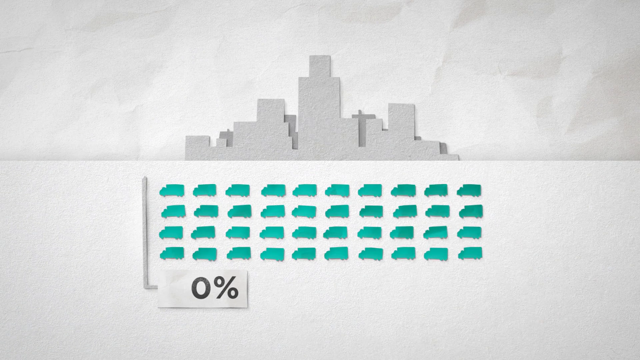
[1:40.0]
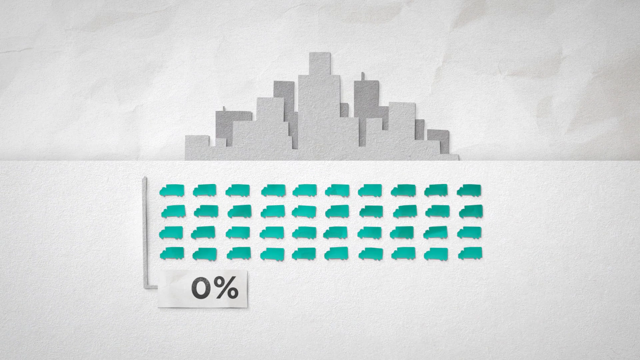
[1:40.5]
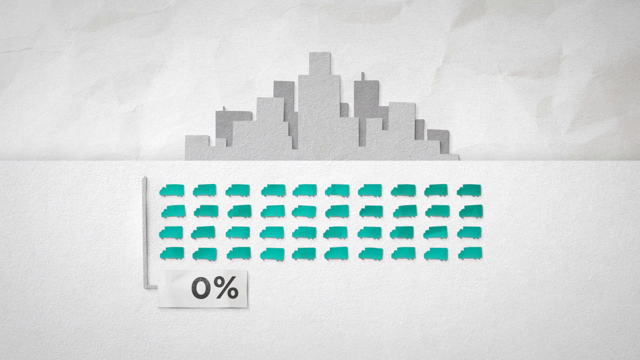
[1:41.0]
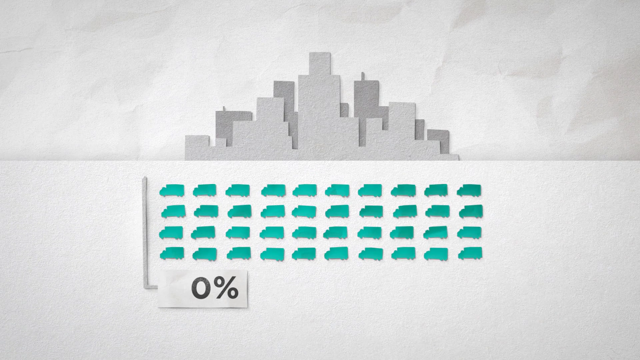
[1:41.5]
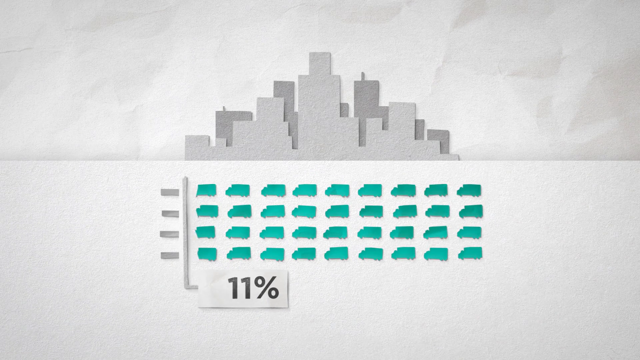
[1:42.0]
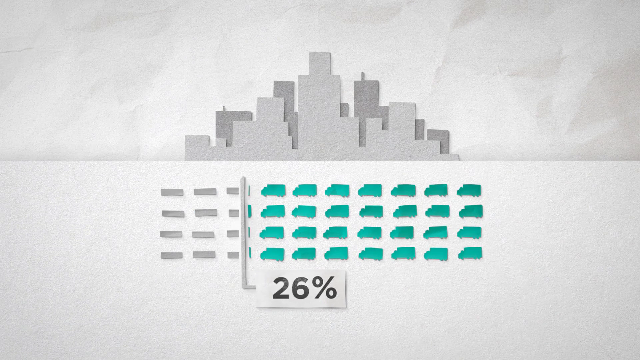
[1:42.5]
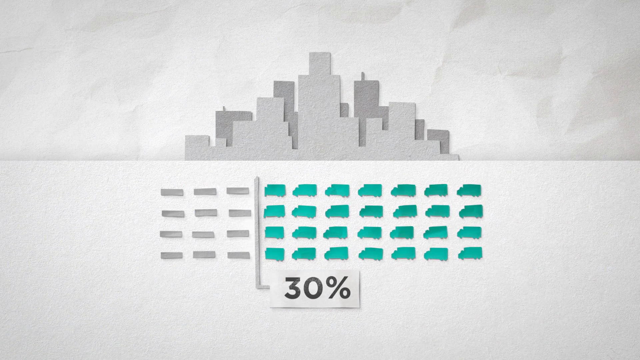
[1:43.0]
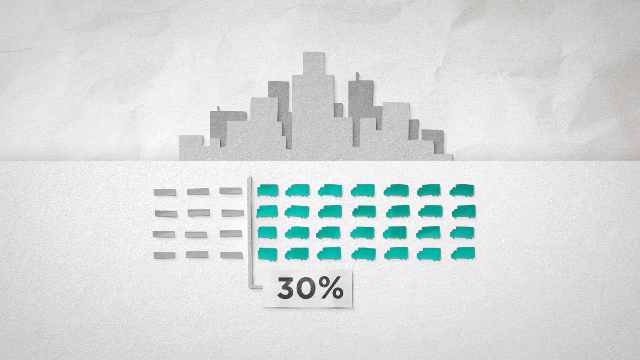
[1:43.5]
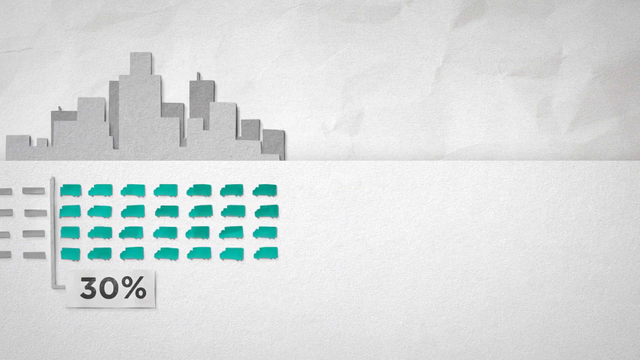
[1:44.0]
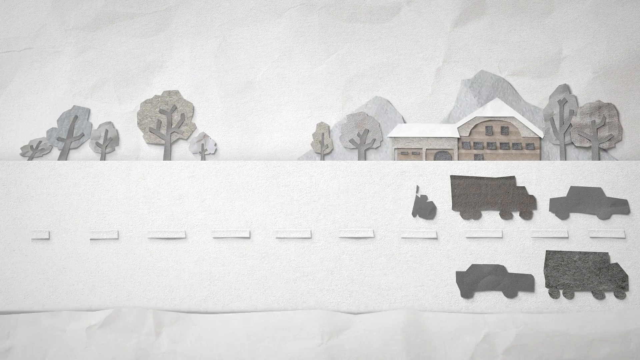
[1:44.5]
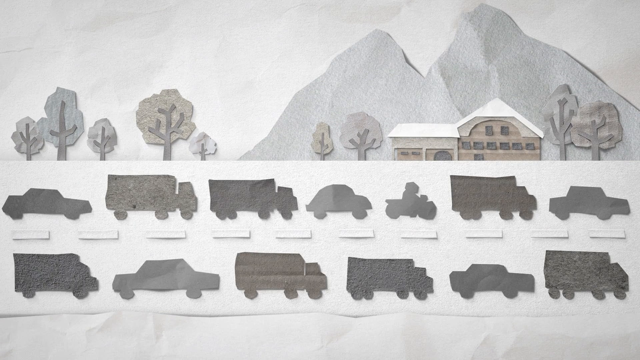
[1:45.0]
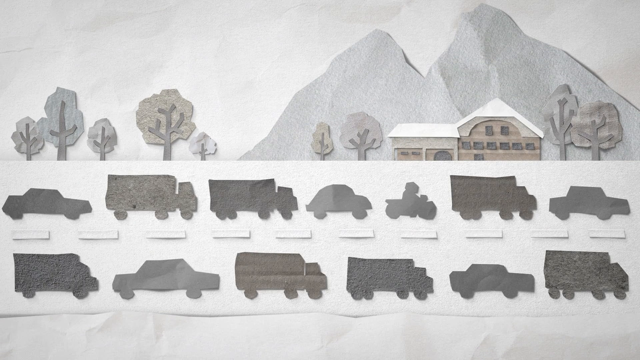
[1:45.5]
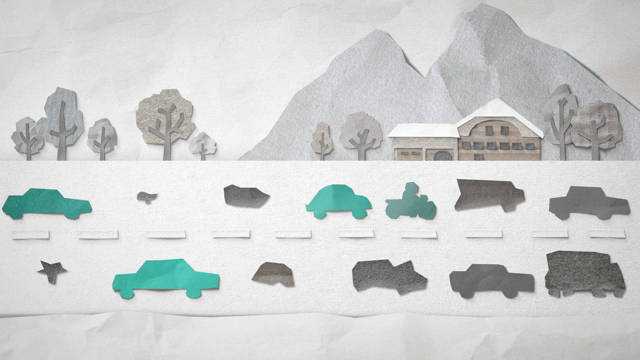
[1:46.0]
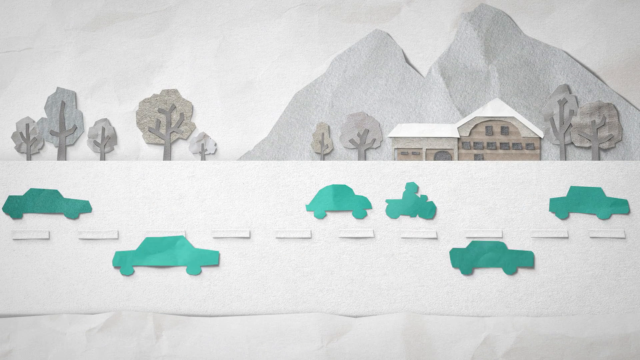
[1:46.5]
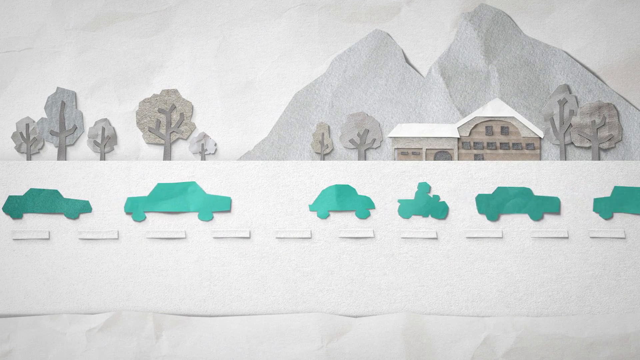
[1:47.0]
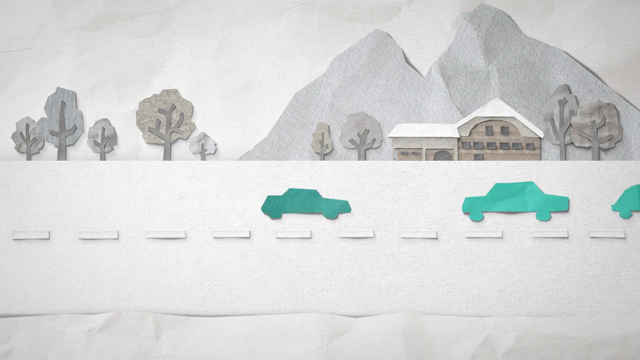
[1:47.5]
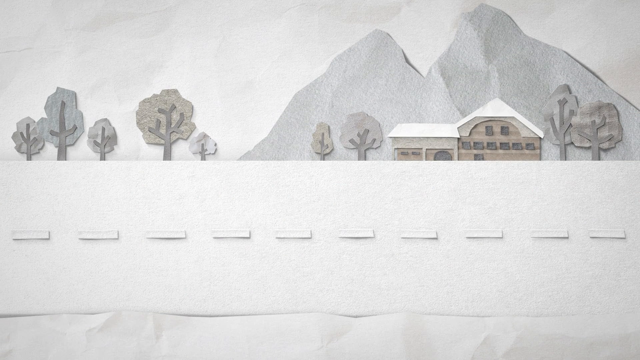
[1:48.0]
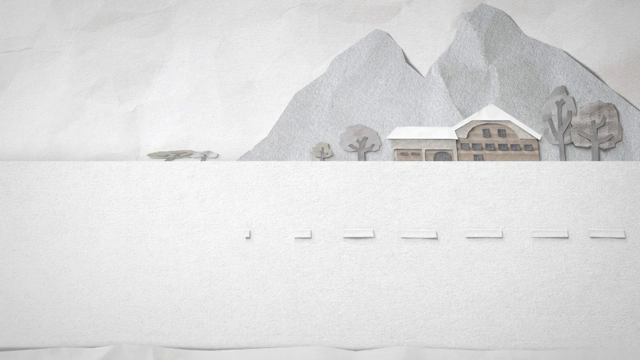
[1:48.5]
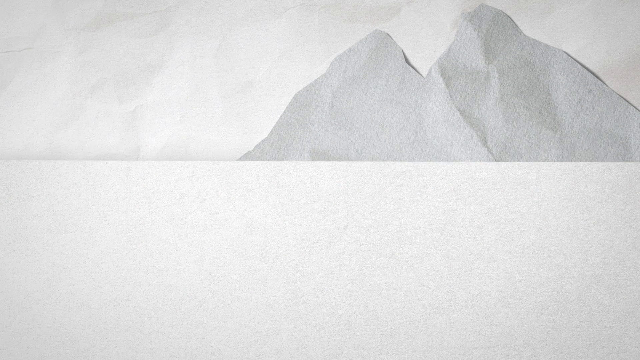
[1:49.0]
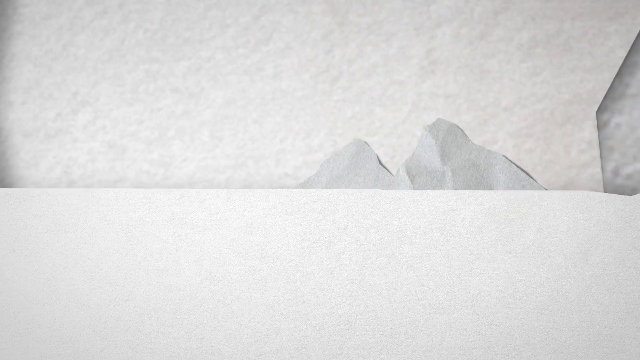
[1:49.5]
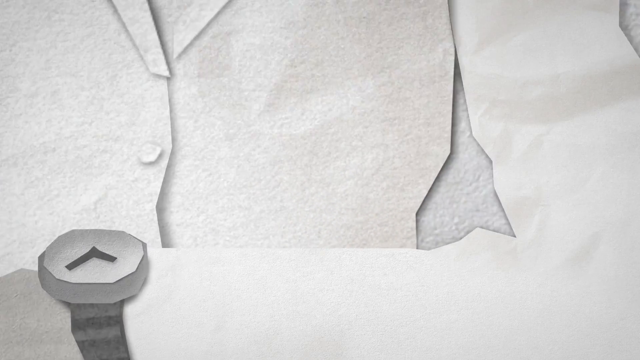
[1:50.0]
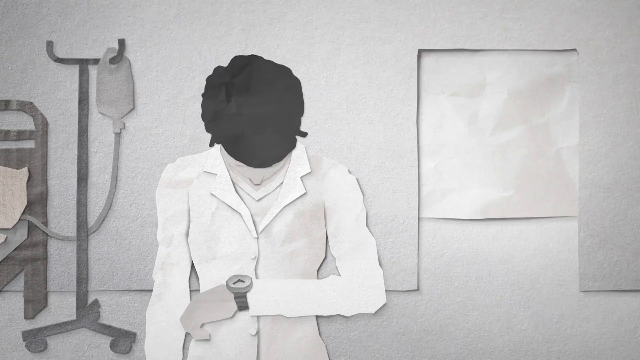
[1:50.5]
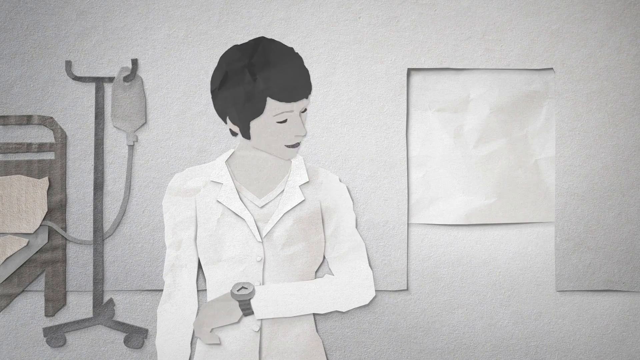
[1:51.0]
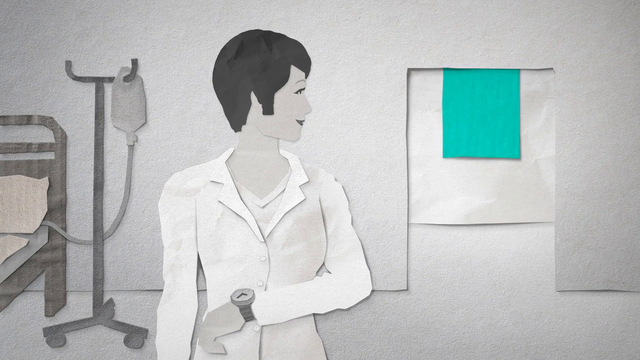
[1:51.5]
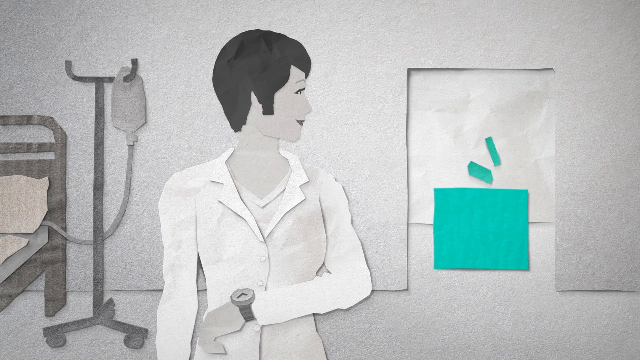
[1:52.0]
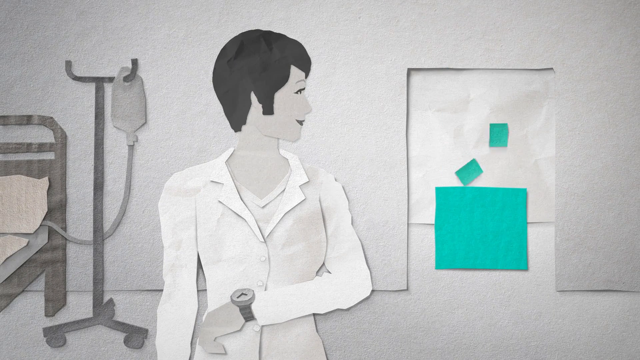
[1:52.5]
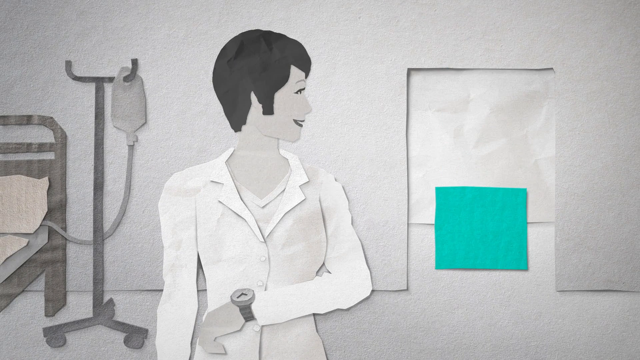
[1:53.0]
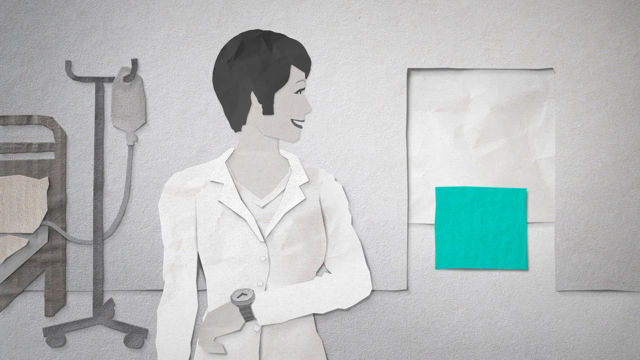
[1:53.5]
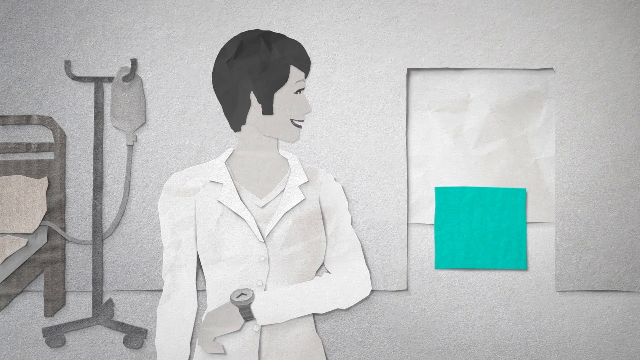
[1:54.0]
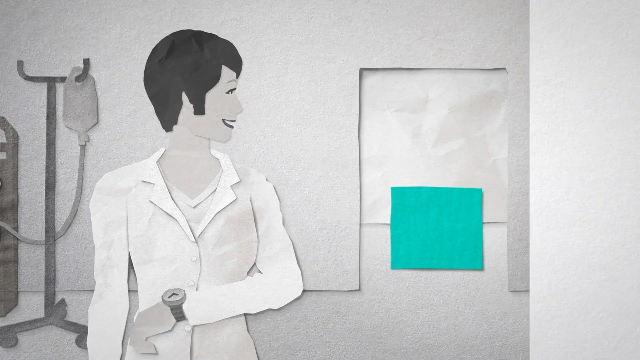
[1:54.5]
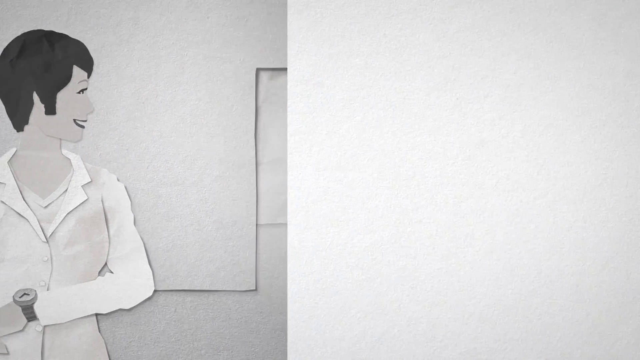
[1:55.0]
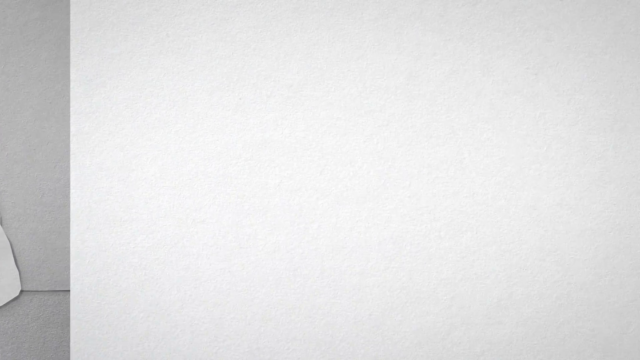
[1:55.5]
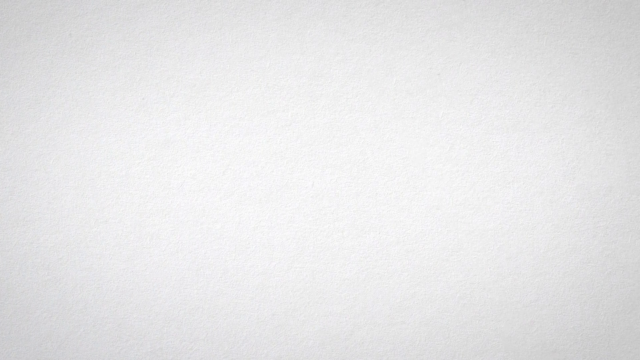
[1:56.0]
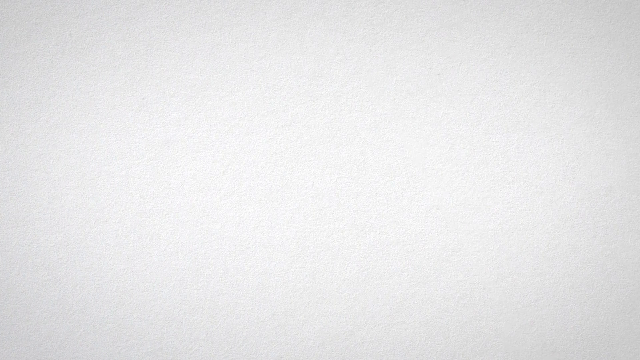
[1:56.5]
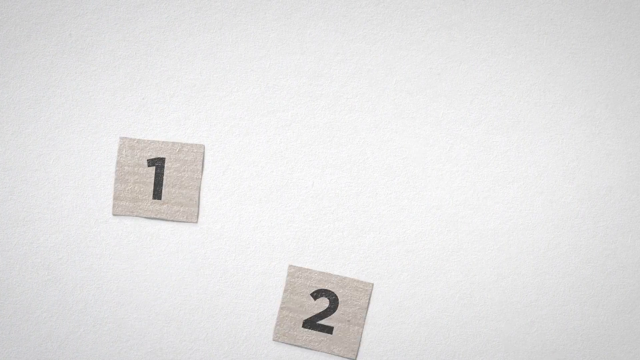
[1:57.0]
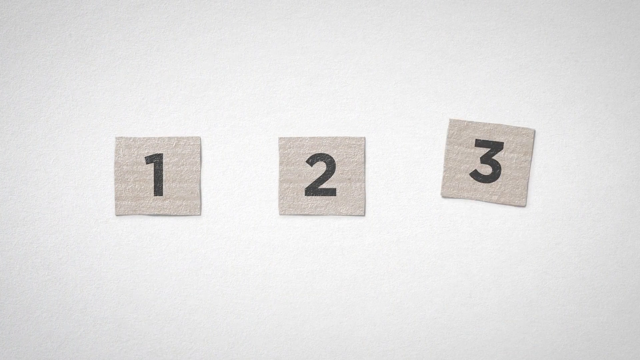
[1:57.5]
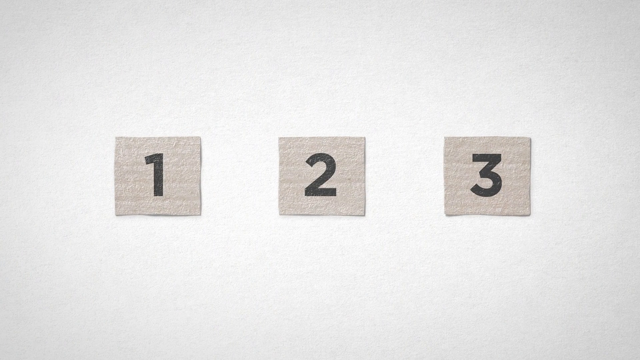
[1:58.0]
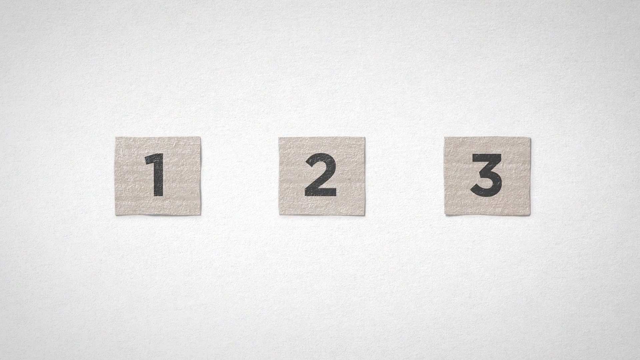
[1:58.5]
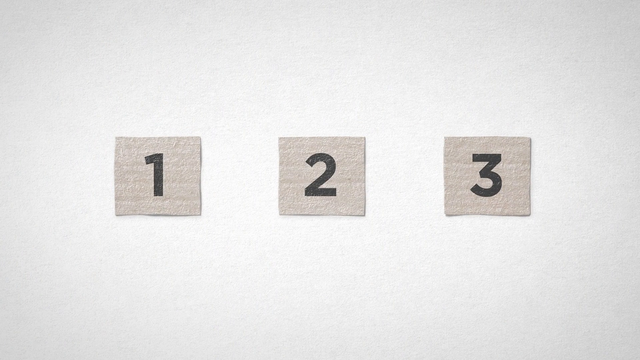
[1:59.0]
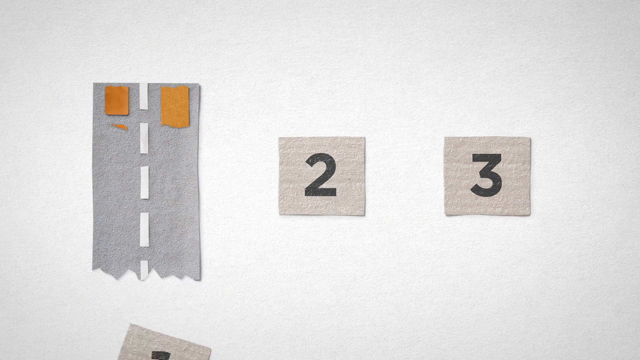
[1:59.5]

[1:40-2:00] The skyline of the city is shown with the trucks moving to the left, and in its place comes what looks like a house, some trees and a couple of mountains in the background, with a very cluttered street in front full of gray trucks. The gray trucks turn into a few gray cars and a single motorcycle, and all of the cars move into the left lane and drive off the screen to the right. The camera zooms out to show a woman made out of paper with short gray hair checking the time on a watch; behind her is a bed with an IV bag. She looks through the doorway, where a teal package appears, and she smiles. A white background moves in from the right of the screen, and the numbers 1, 2, 3 appear on more beige squares. After the 1 disappears, a road with approximately six orange trucks and cars on it is shown.